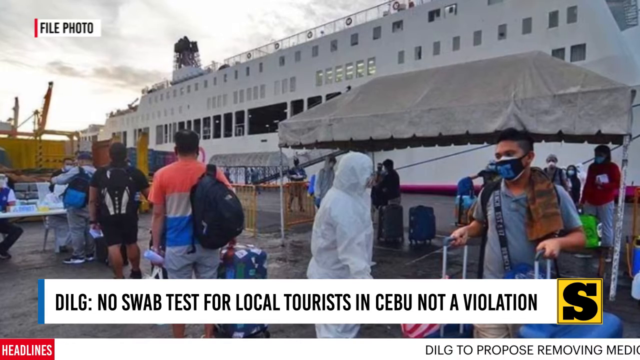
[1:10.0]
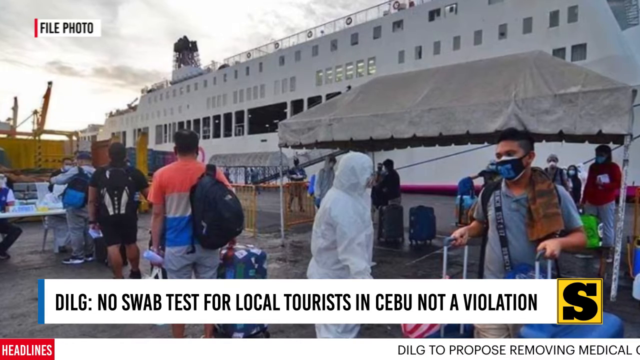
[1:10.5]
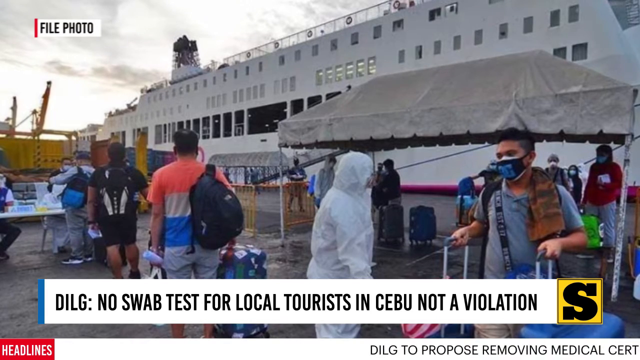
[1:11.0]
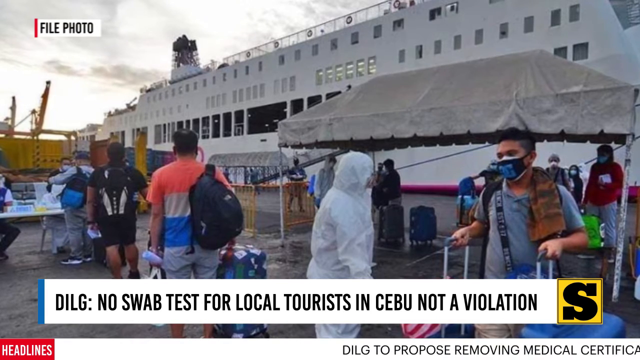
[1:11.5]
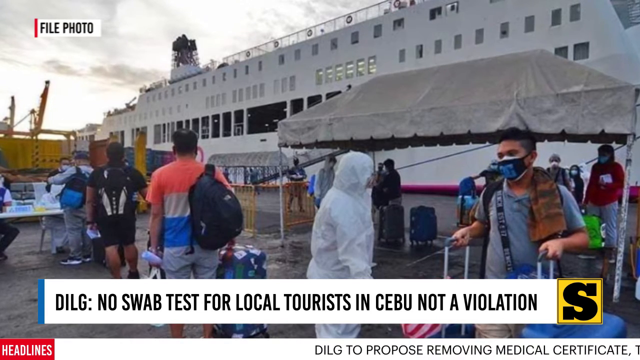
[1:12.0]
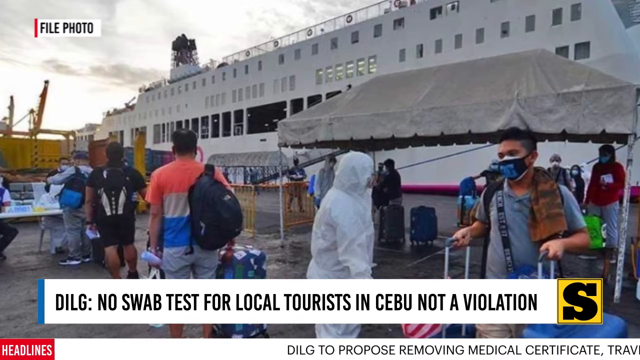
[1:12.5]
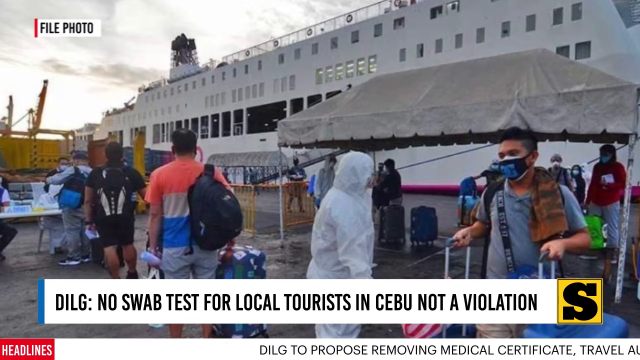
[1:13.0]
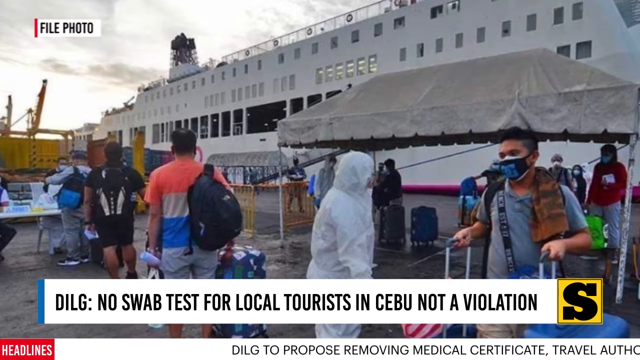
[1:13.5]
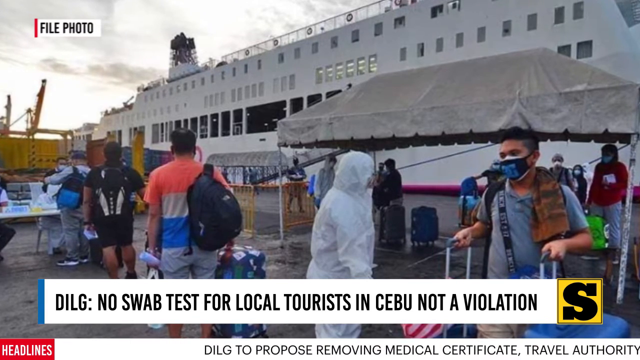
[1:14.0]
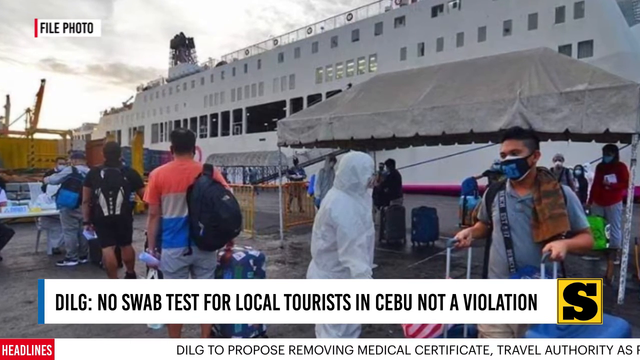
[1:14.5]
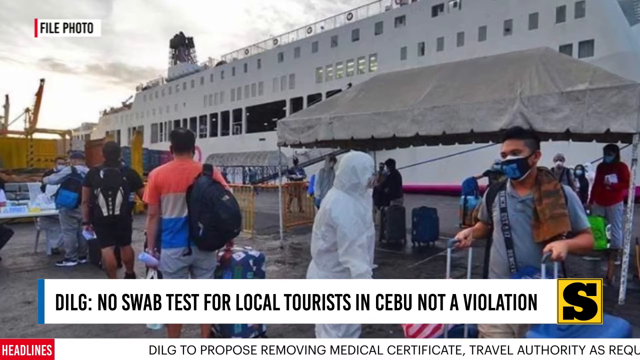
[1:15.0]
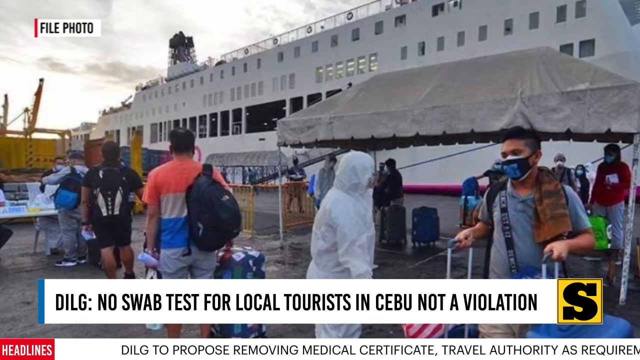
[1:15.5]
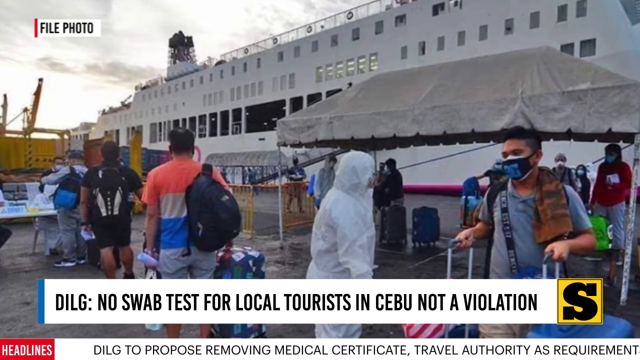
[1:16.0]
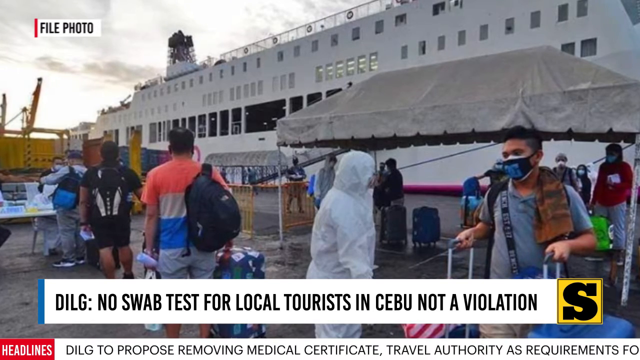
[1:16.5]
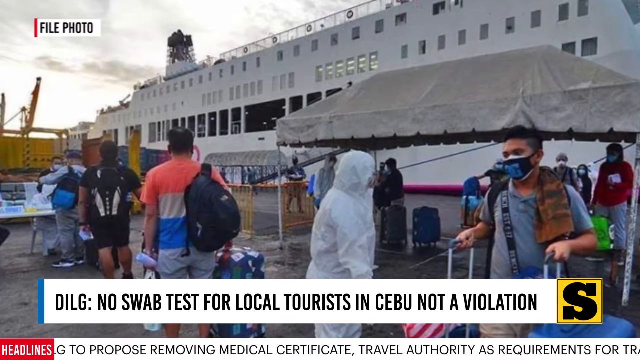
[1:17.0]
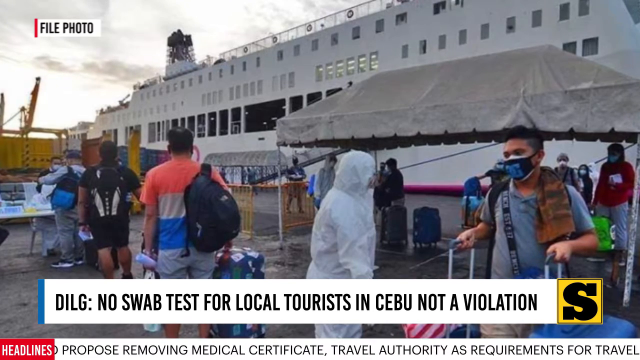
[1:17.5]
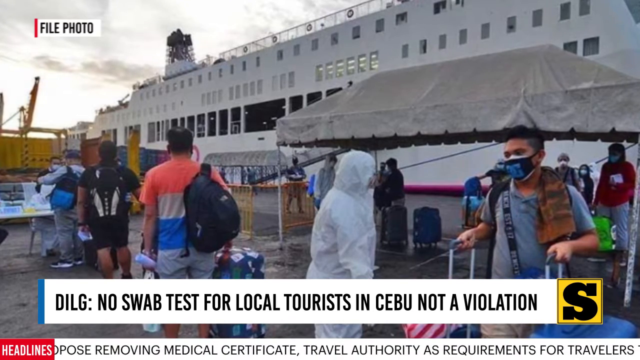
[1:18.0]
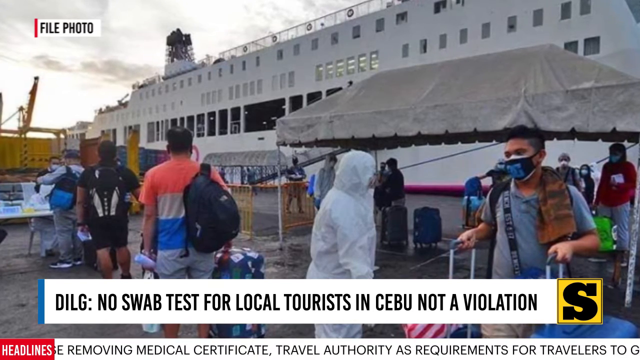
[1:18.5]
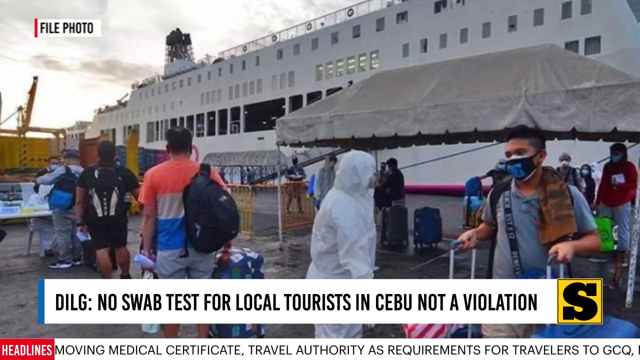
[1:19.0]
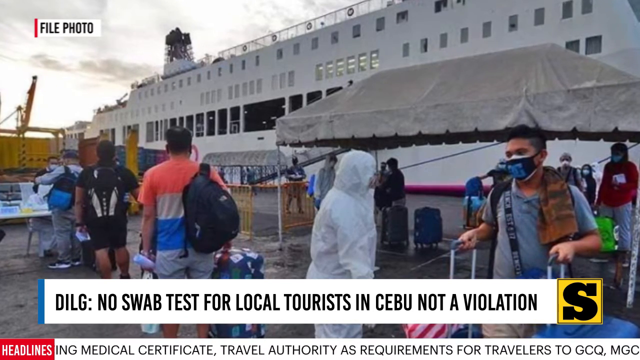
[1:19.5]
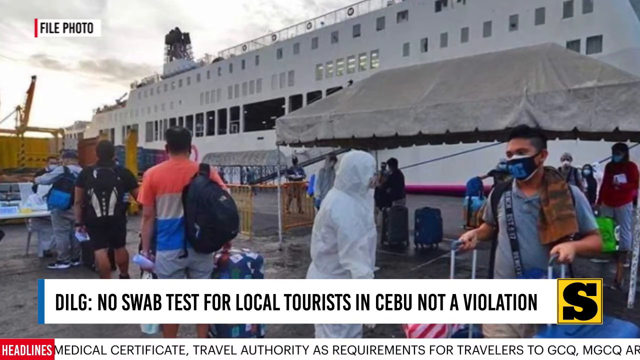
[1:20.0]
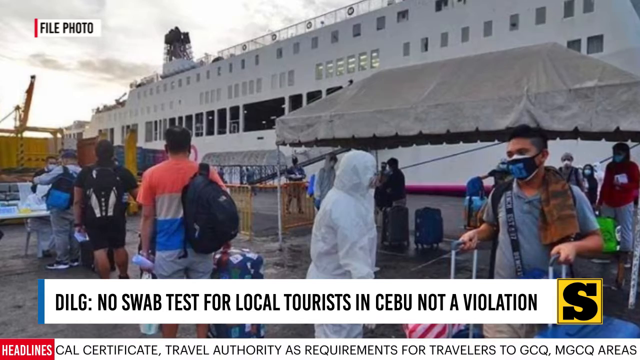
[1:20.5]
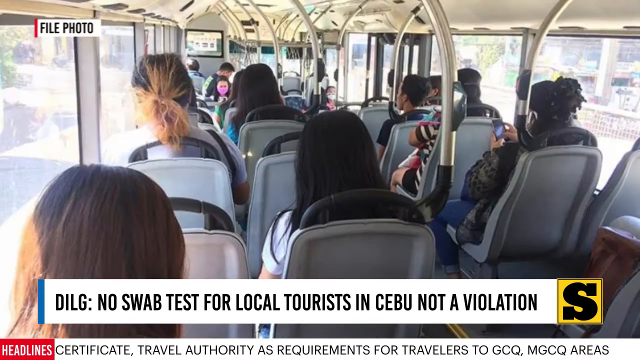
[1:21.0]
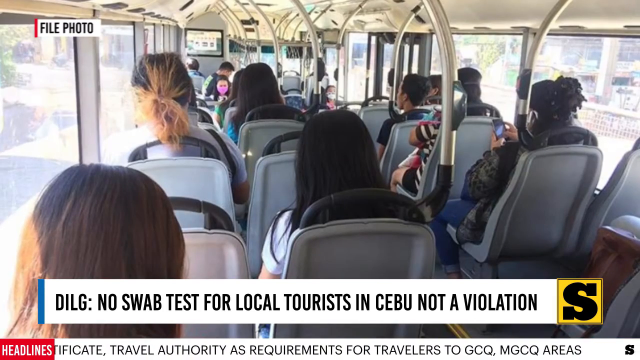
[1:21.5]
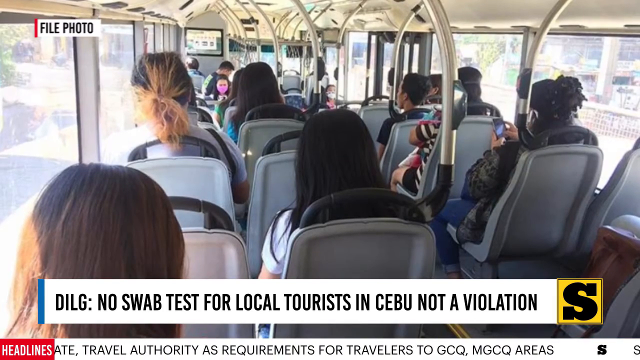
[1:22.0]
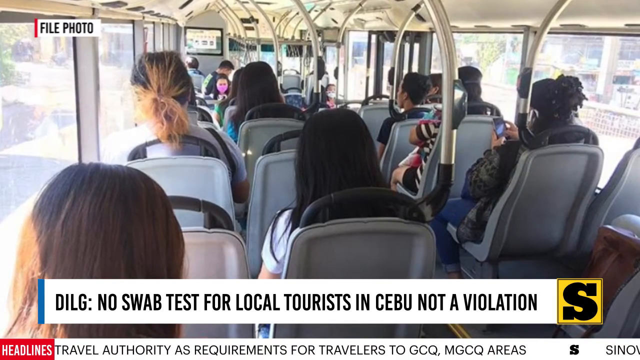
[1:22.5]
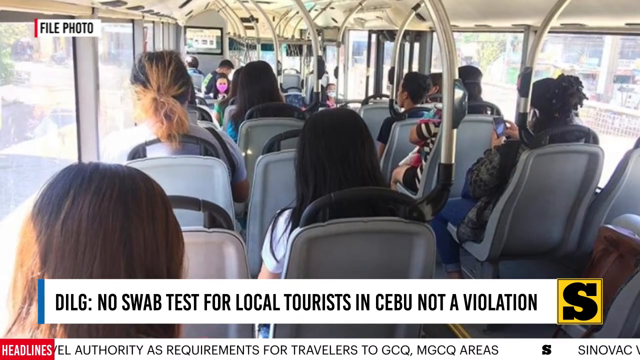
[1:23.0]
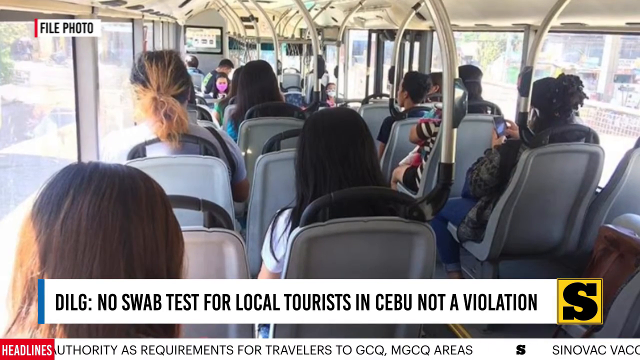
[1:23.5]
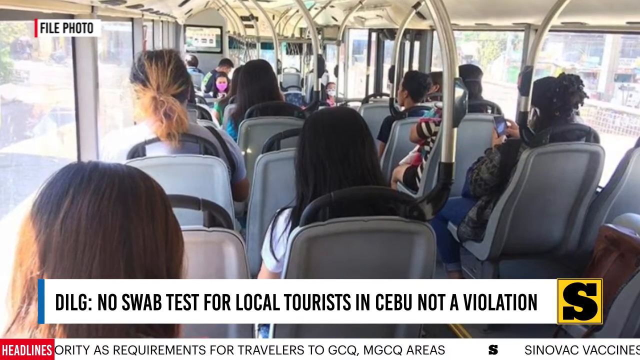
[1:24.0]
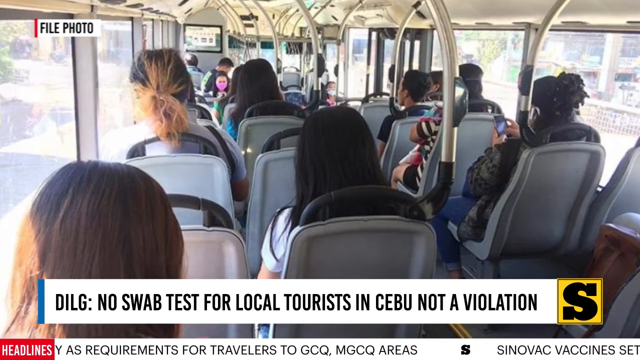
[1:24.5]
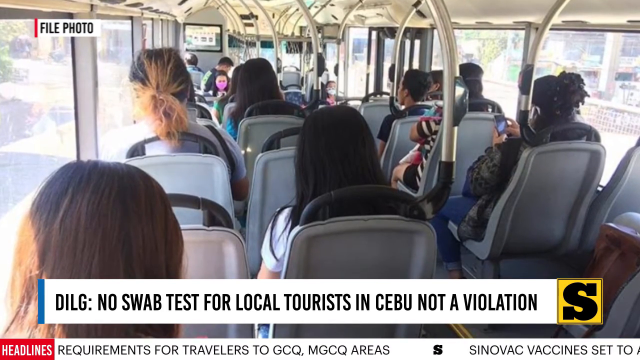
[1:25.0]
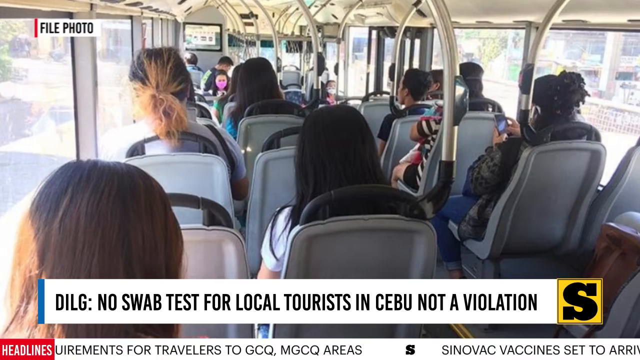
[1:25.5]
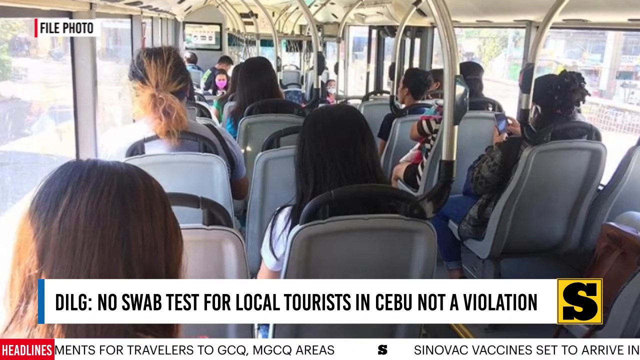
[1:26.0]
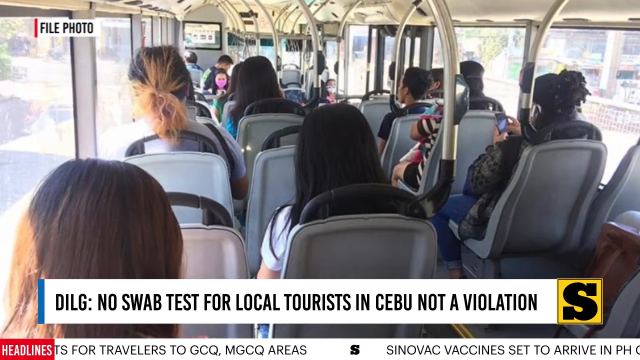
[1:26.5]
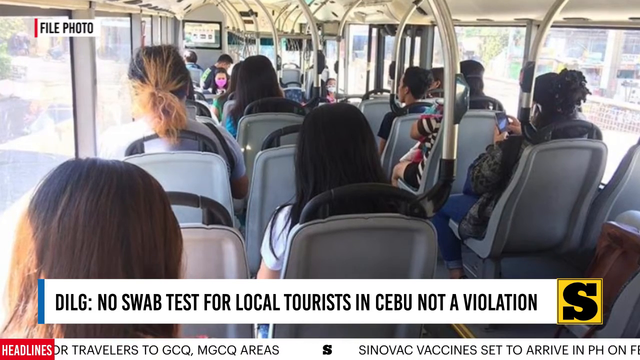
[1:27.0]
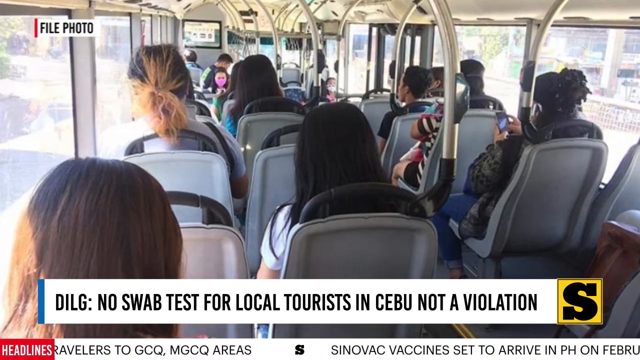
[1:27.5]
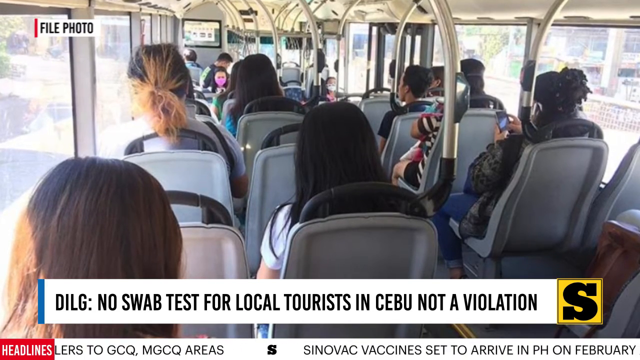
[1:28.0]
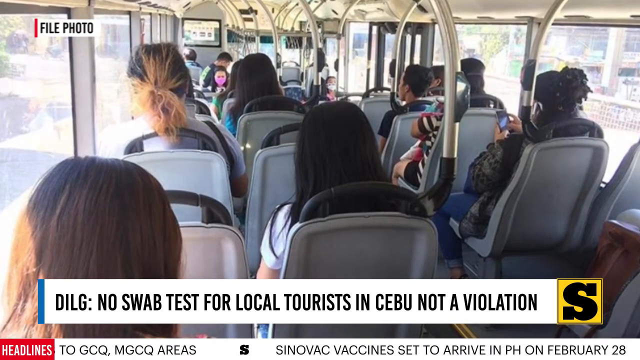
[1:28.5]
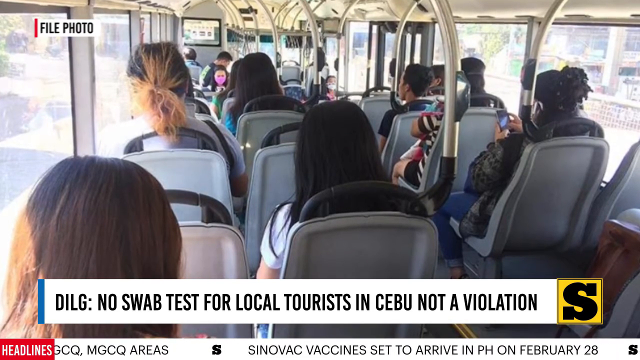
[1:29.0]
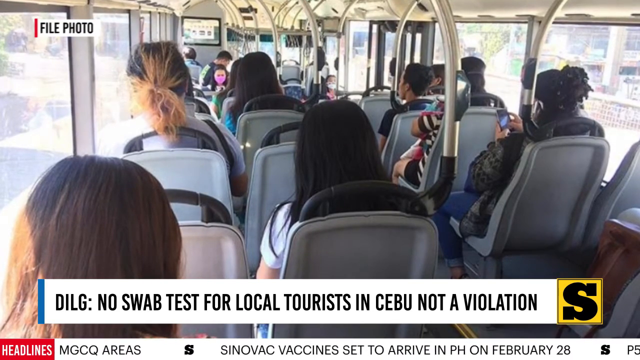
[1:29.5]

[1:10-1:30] A photograph shows the outside of a ferry boat. On the right side is a canopy with people under it, all with roll-on baggage. Other people face the left side, where there is a table, and they appear to be getting something checked; a line of three people stands there, one wearing a black backpack. In the right foreground is a person with two roll-on luggages and a double mask, apparently a male in a grey shirt. The banner at the bottom is the same, reading "no swab test for local tourists in Cebu not a violation" from the DILG. What looks like some kind of yellow crane is on the far left side. The ferry boat is very long, with many windows, and its top deck is visible.